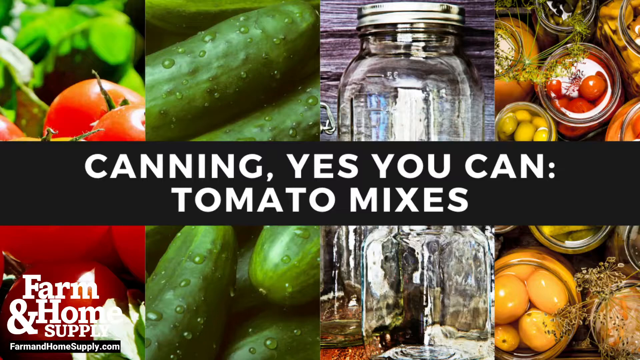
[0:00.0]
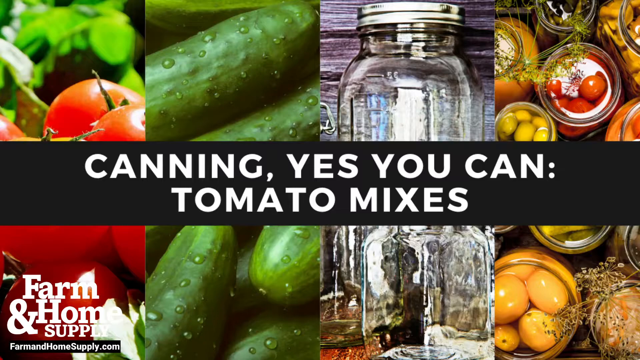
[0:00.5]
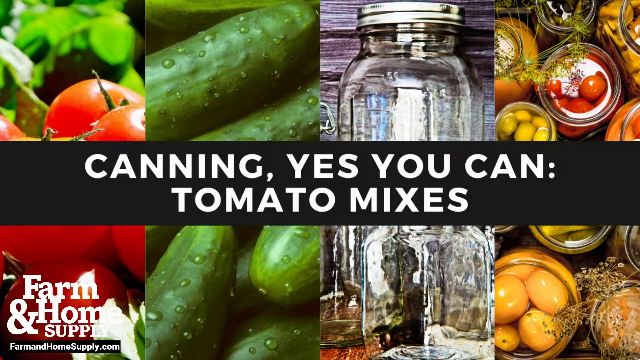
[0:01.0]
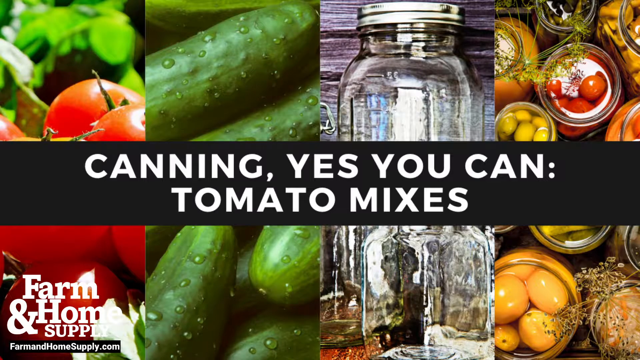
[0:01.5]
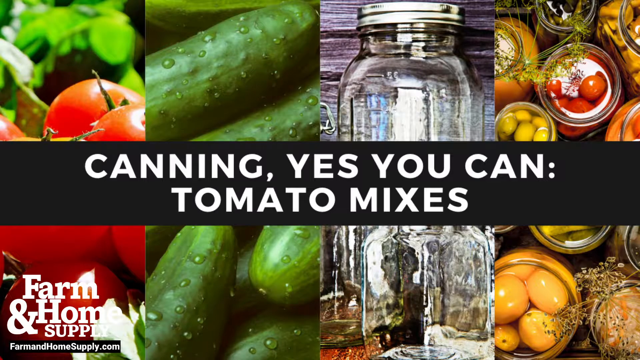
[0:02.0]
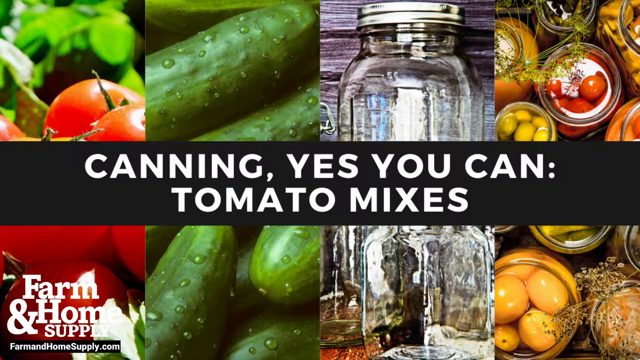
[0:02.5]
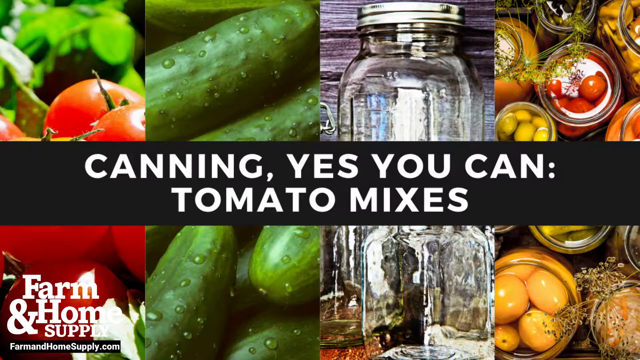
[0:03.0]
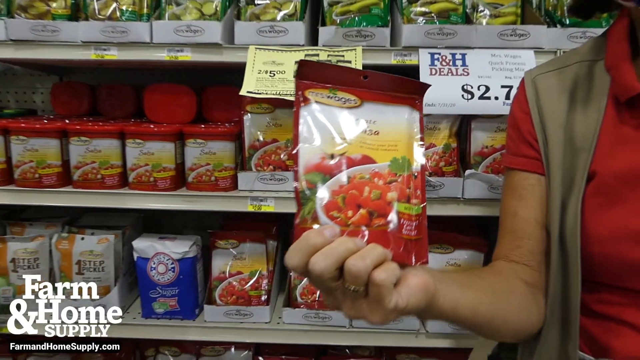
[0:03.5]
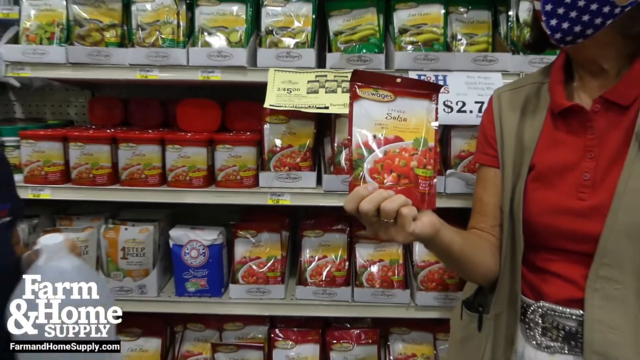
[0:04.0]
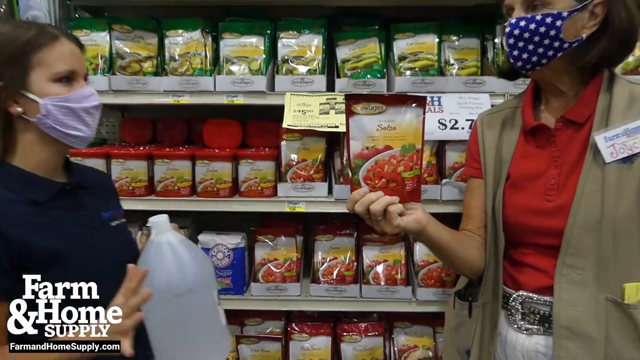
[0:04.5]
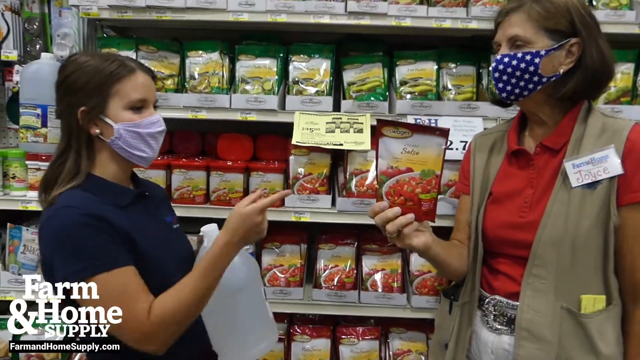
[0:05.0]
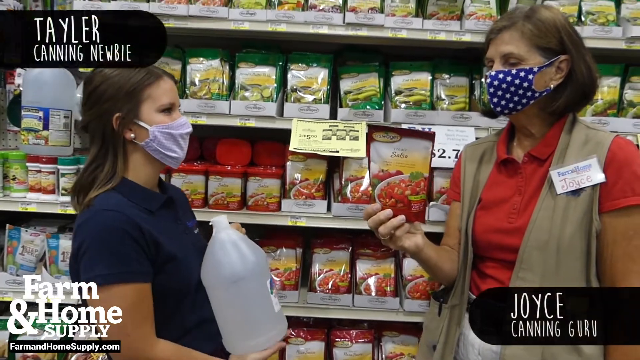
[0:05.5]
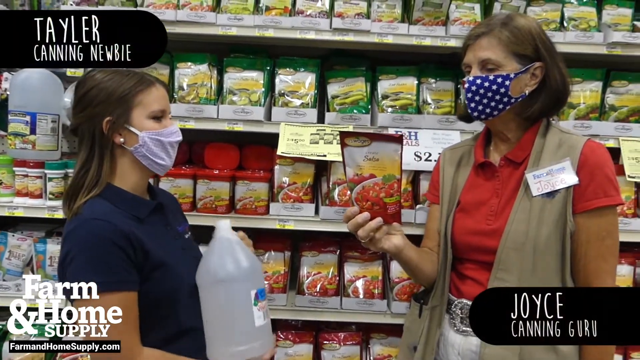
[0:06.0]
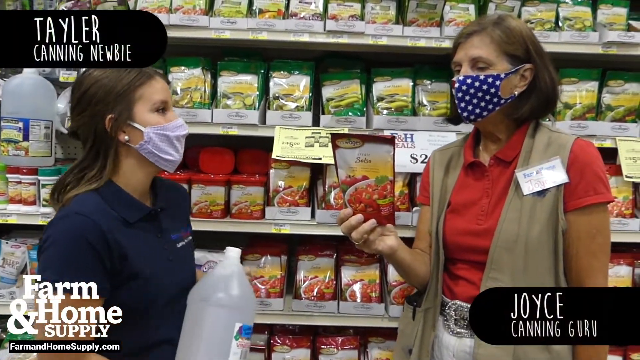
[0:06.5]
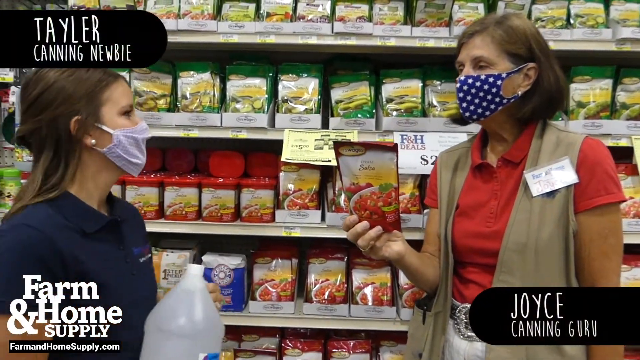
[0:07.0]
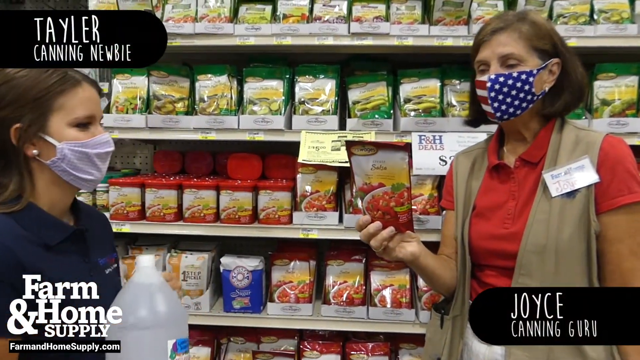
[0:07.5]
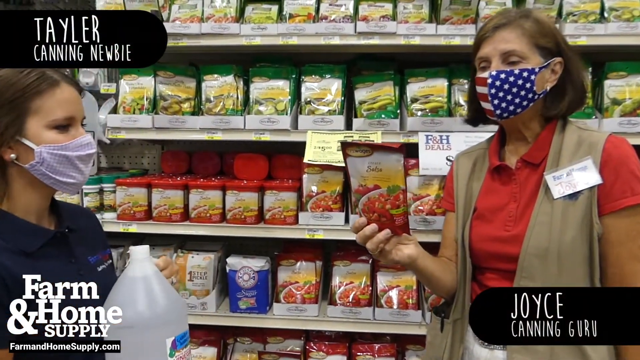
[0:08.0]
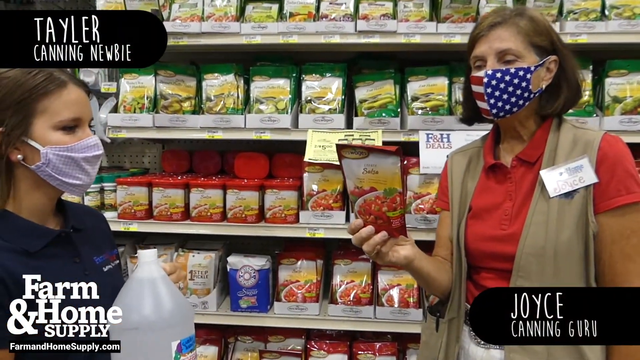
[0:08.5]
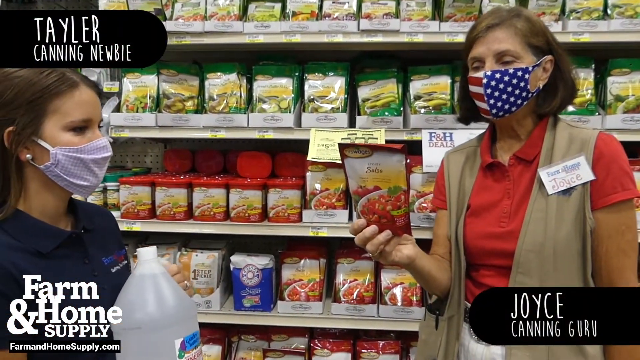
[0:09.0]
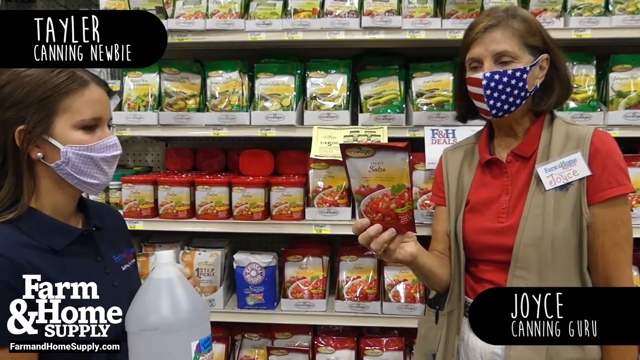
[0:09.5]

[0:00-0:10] The video opens with an image of a number of vegetables, along with cans or jars and items inside those jars. White text over a black banner reads "Canning, yes you can: Tomato mixes". The scene changes to a grocery store. An older woman wearing a mask is identified as Joyce, a canning guru, and a younger woman on the left, also wearing a mask, is identified as Tayler, a canning newbie. Joyce holds up a small package while Tayler holds up a large jug of clear liquid. The two seem to be having a conversation, occasionally looking at the camera.